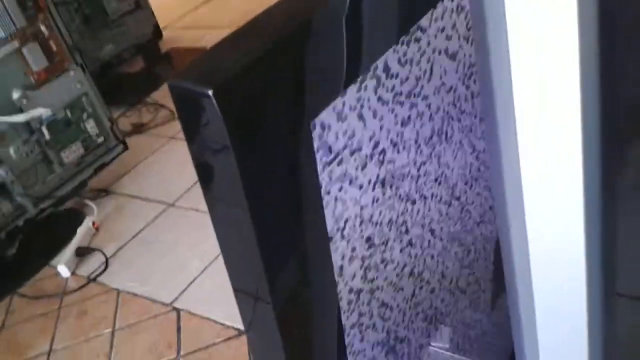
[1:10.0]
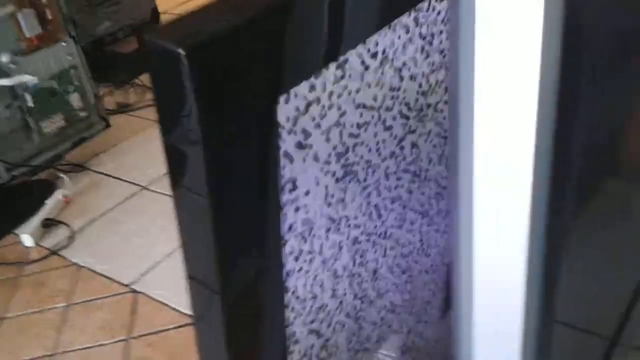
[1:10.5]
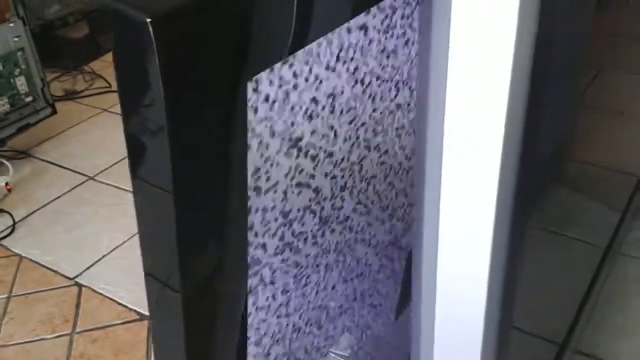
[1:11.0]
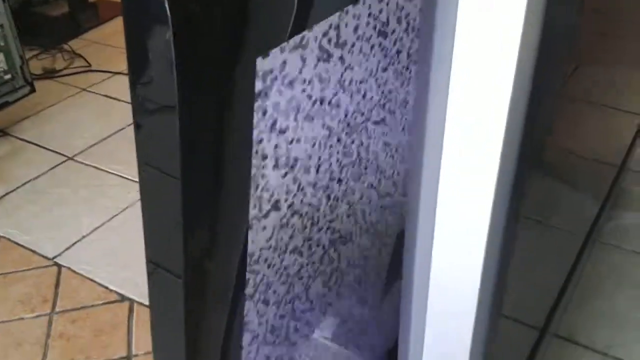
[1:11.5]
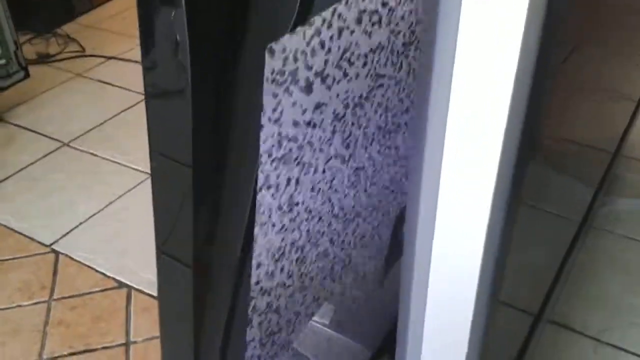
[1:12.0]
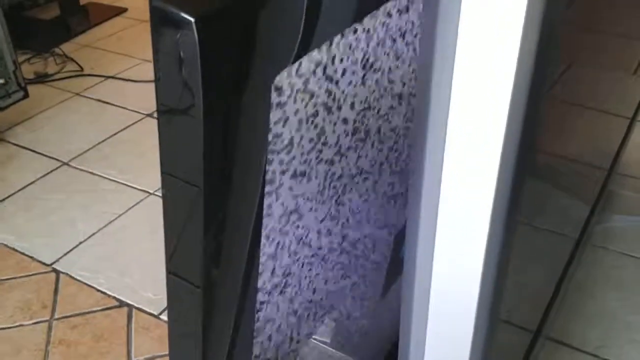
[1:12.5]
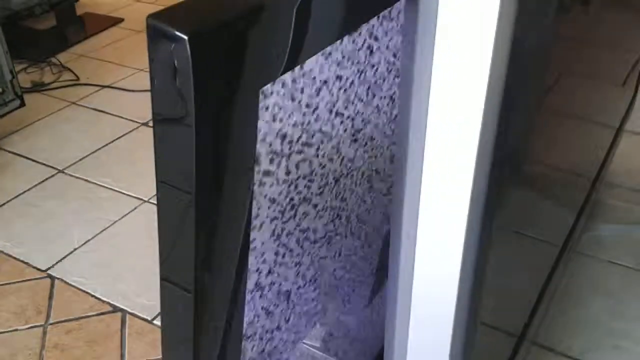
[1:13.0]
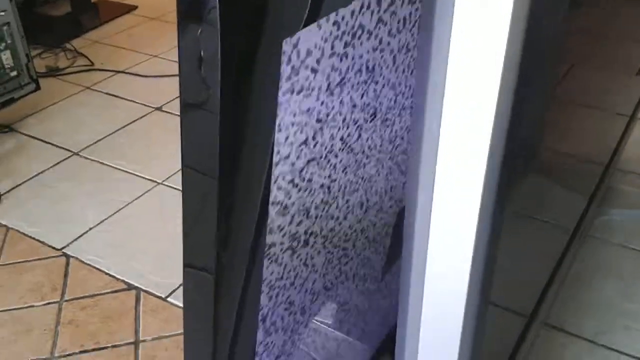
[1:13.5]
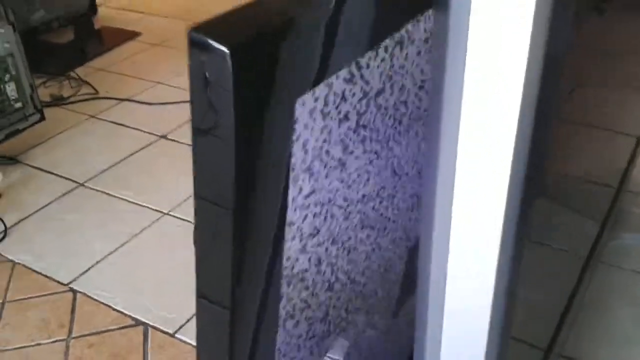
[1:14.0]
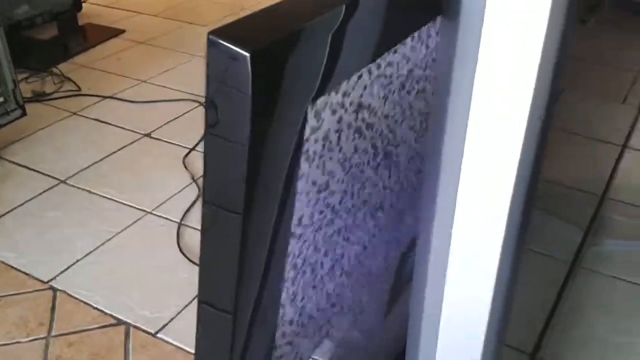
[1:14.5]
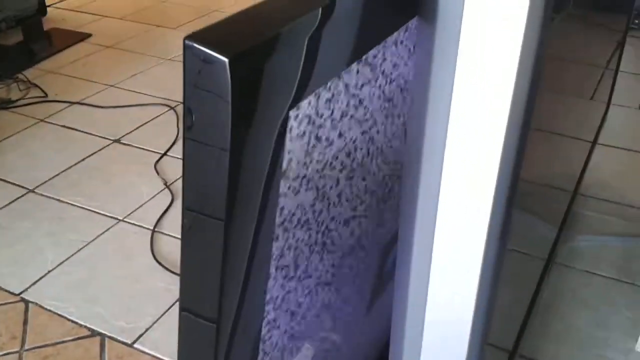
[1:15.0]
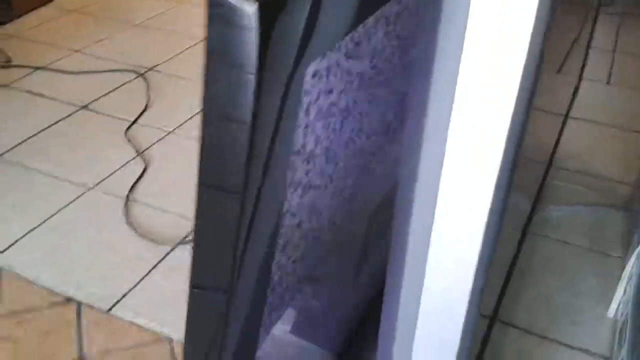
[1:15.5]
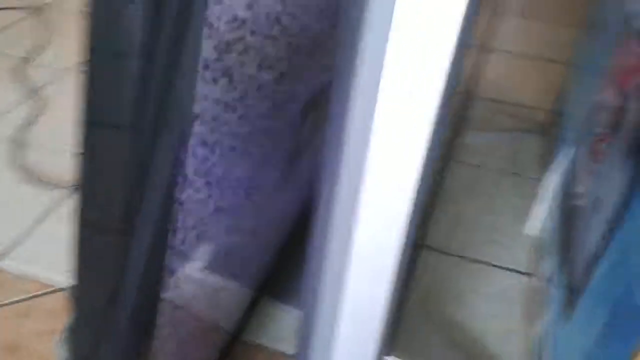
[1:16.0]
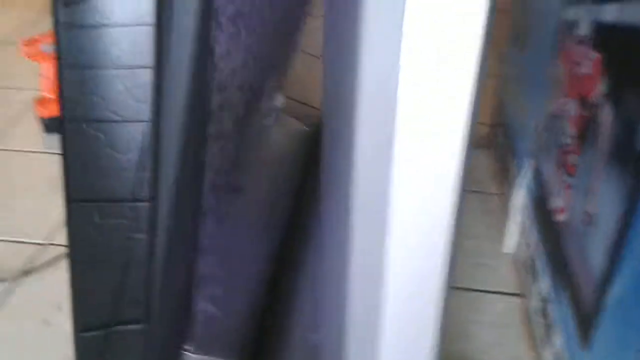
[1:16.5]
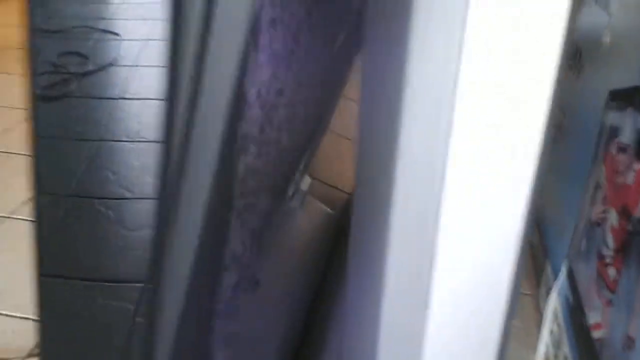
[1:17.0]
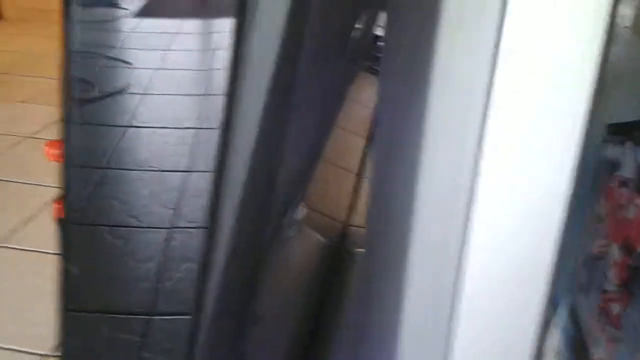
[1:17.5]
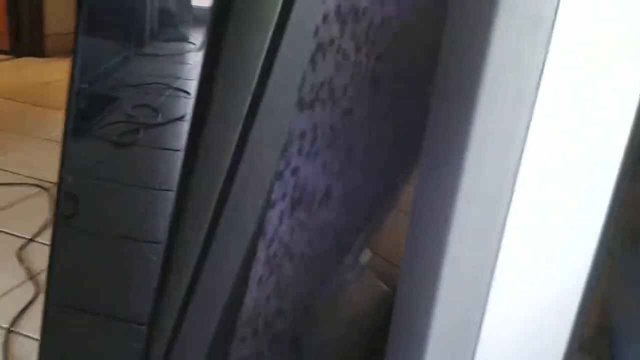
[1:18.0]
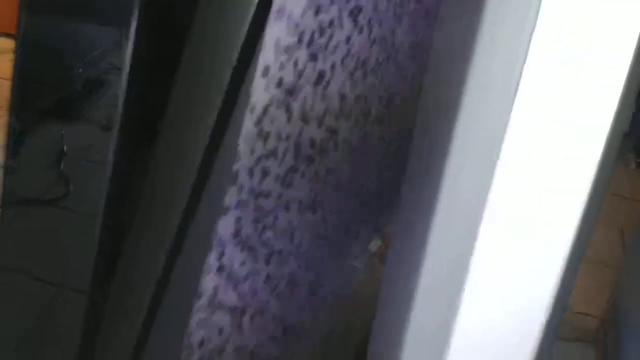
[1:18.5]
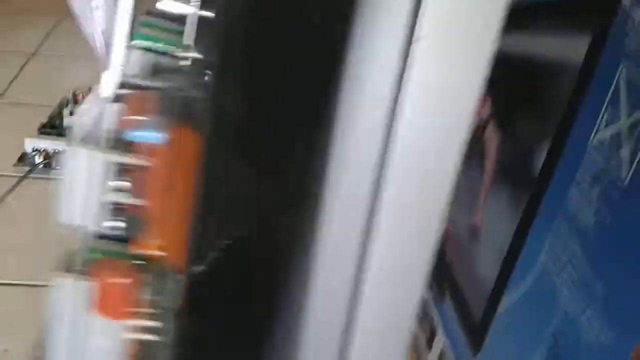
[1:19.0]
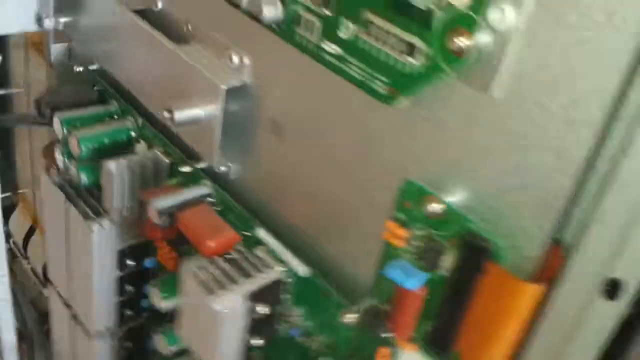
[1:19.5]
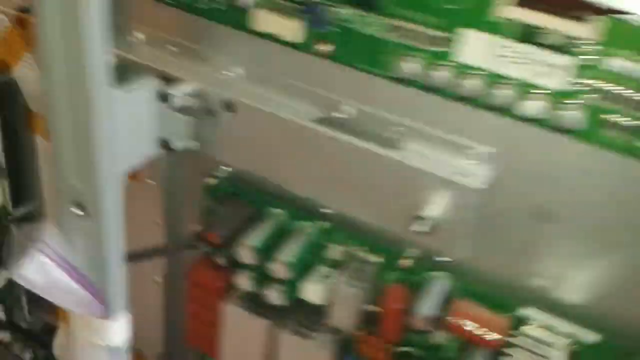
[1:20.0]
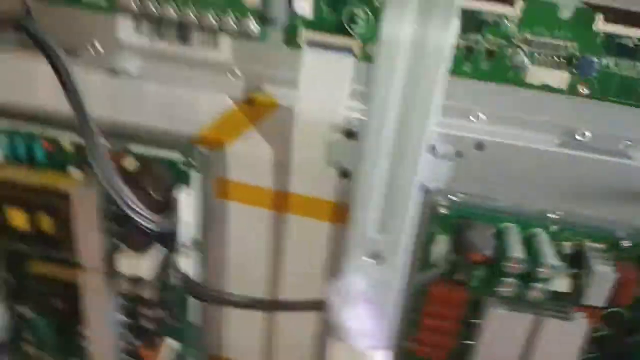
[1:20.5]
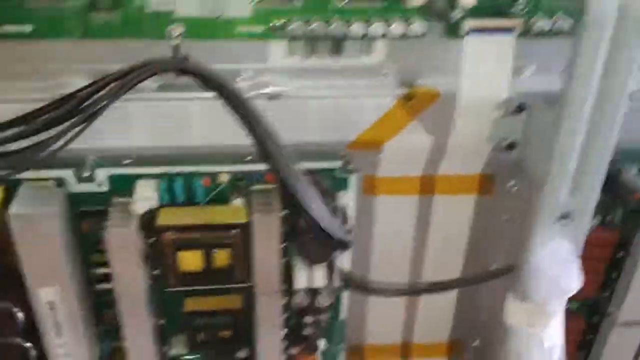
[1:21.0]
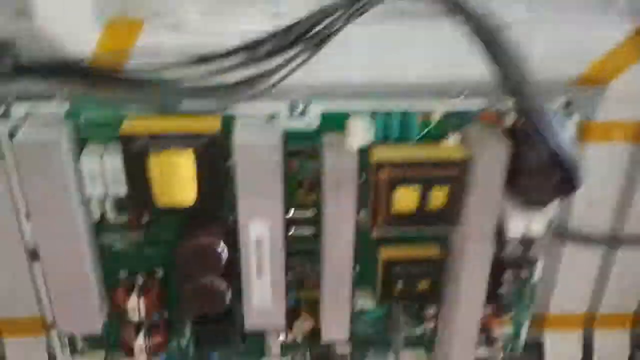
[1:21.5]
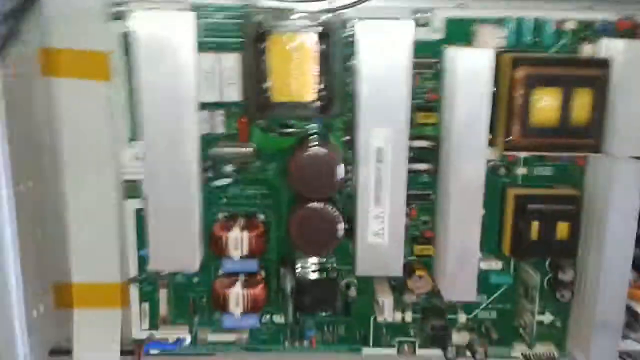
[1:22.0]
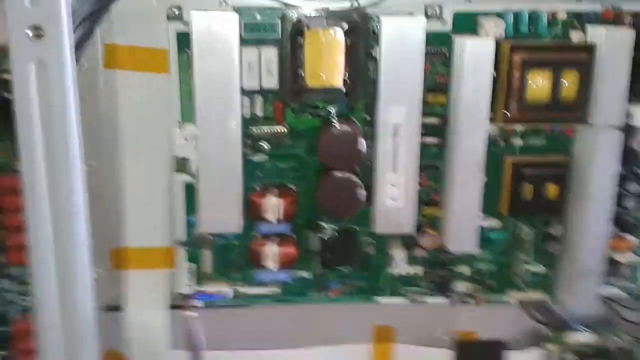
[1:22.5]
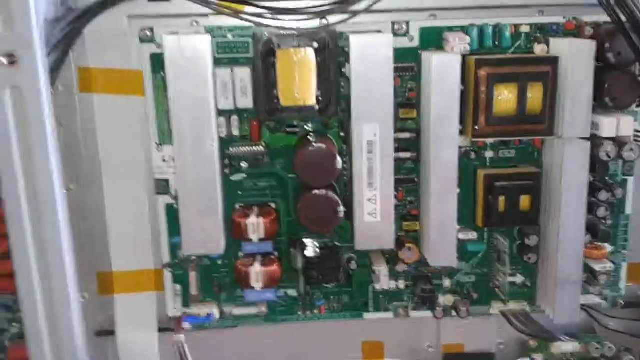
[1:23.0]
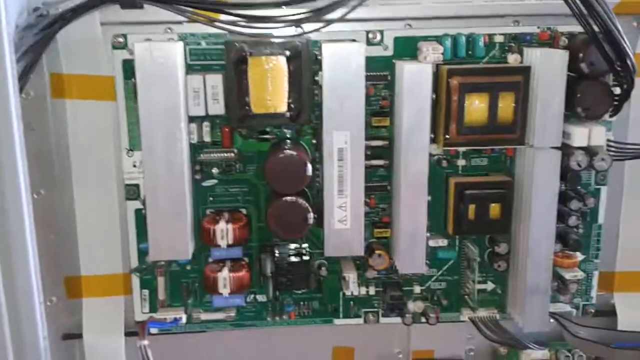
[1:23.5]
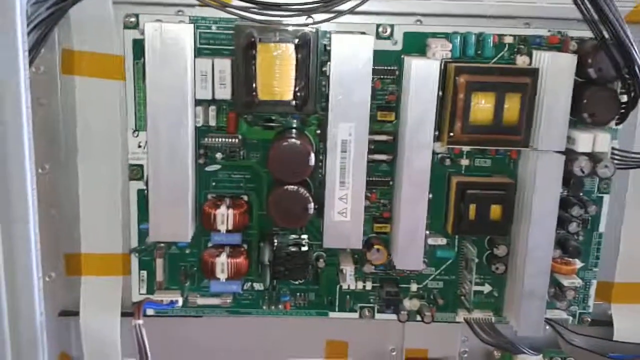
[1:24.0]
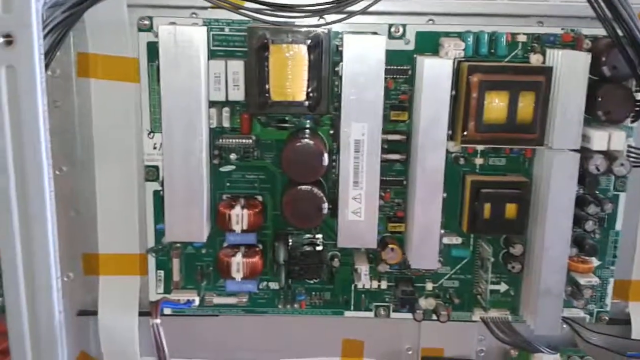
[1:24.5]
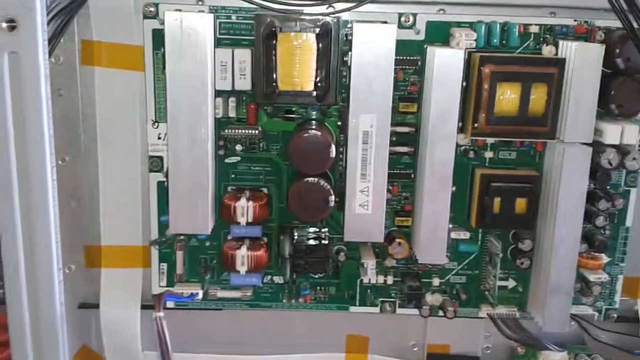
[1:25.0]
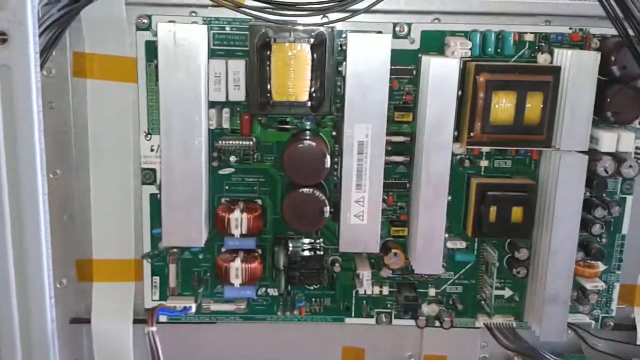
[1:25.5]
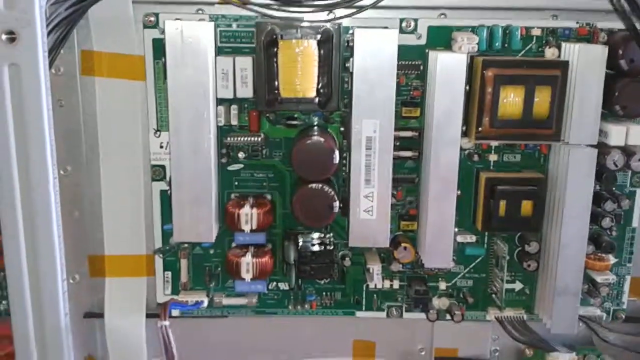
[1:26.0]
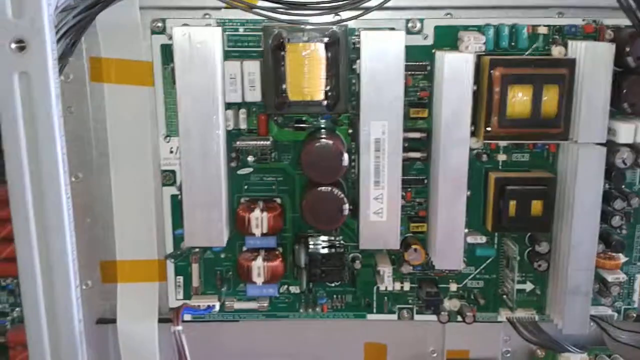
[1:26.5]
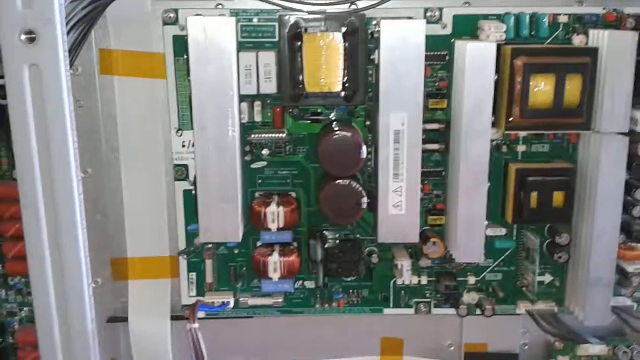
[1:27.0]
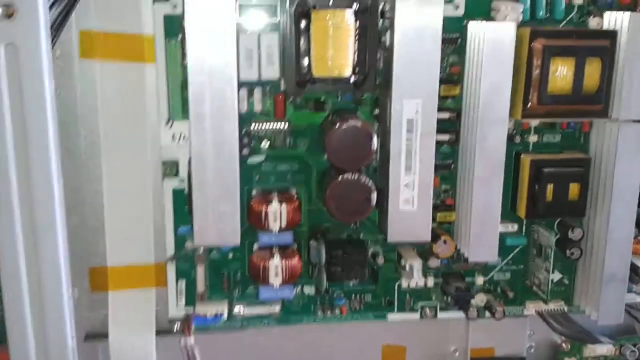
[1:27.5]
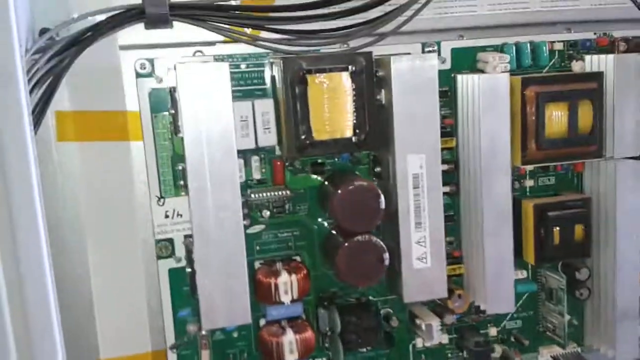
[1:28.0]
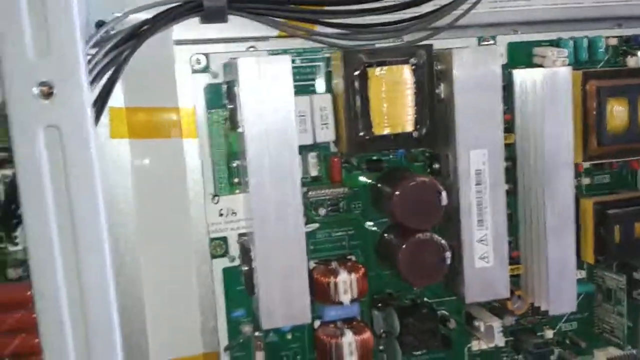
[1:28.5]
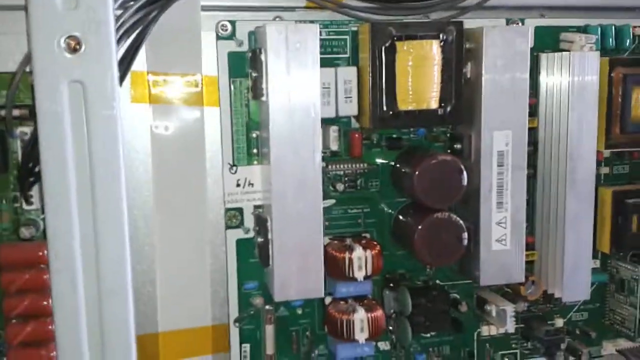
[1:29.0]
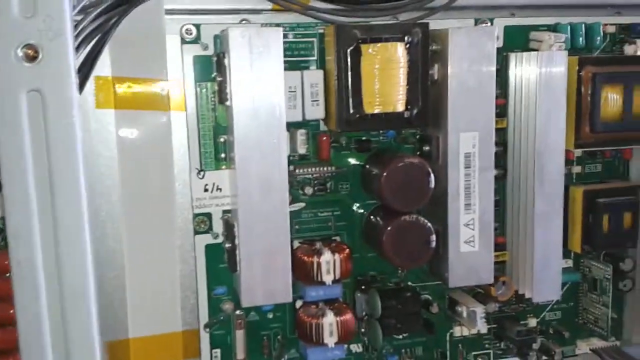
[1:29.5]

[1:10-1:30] The front left corner of a thin television is visible, its screen showing nothing but fuzz. The person with the camera walks around from the front of the TV to the back, revealing the circuit boards inside the flat screen TV: resistors, capacitors, diodes, transistors, integrated circuits and two relay switches. There are two large white circle-shaped inductors wrapped with copper wiring. In sequence there is an inductor, then a transistor, then an inductor, and underneath that another blue transistor. Black wiring goes from that circuit board up above it to another part of the TV.